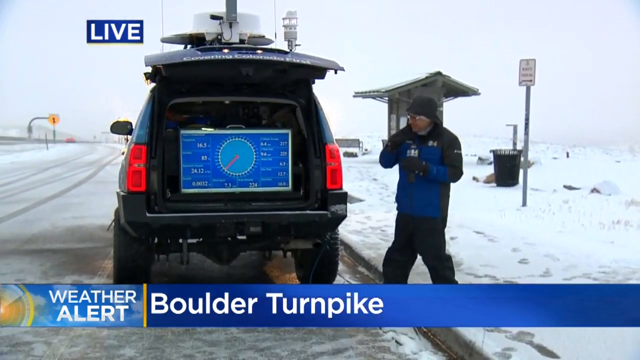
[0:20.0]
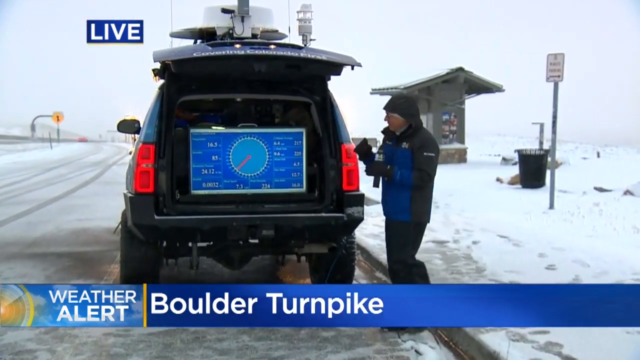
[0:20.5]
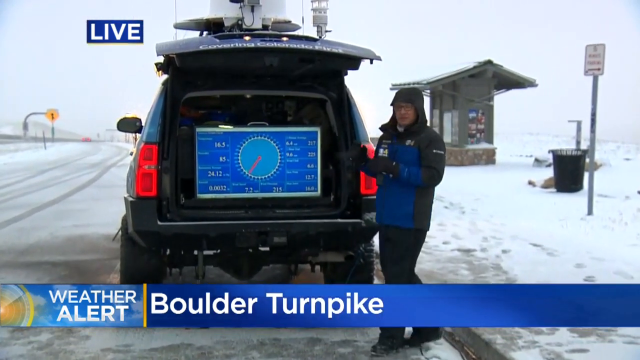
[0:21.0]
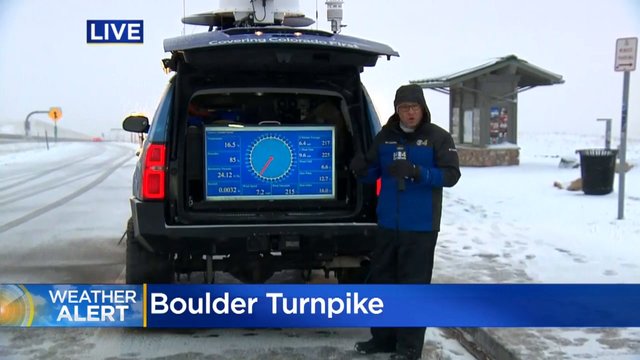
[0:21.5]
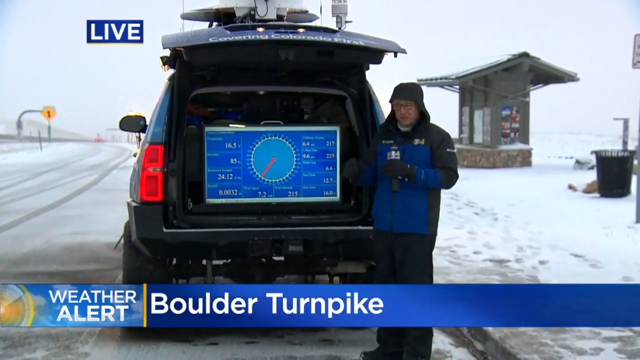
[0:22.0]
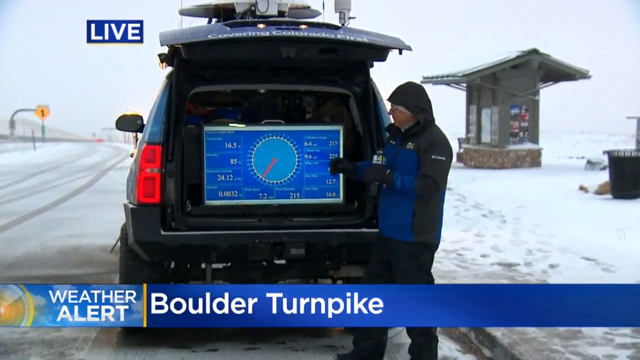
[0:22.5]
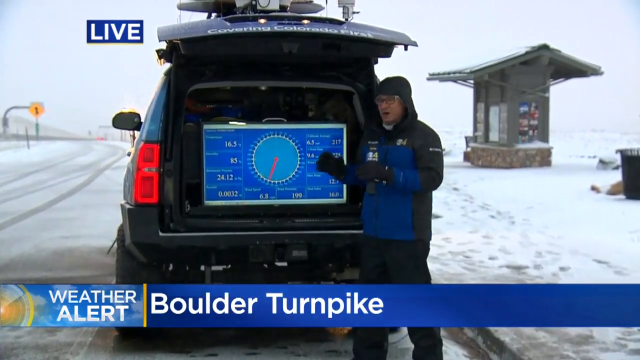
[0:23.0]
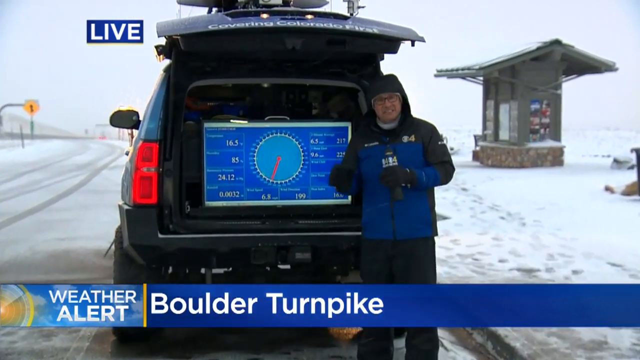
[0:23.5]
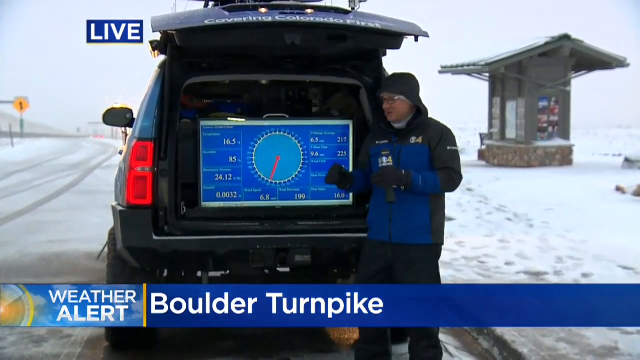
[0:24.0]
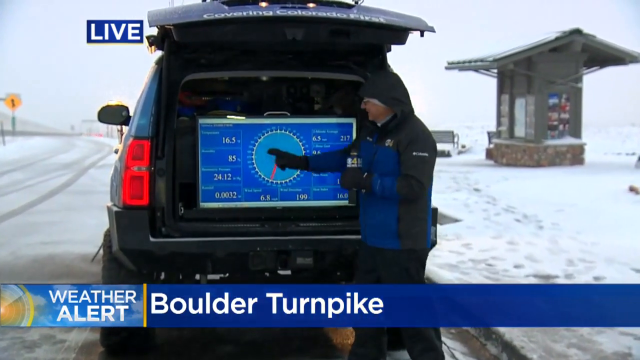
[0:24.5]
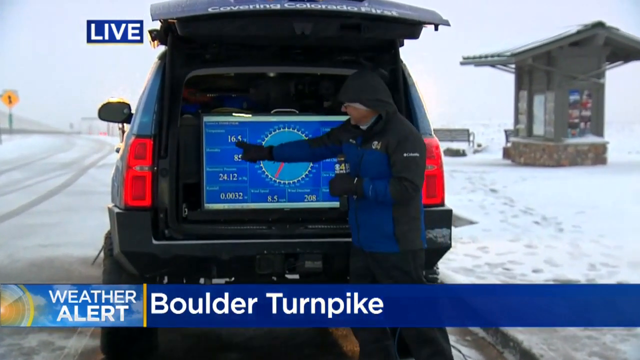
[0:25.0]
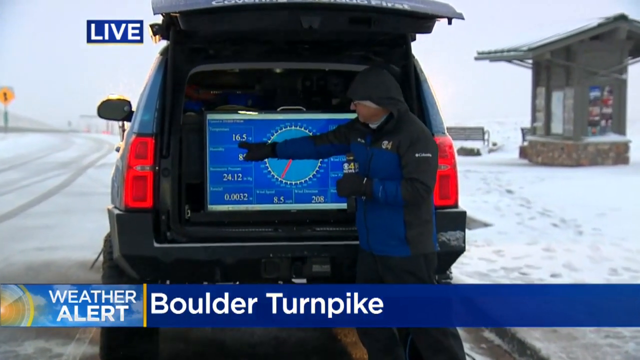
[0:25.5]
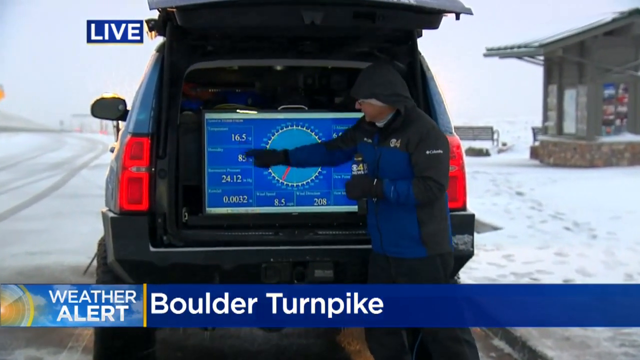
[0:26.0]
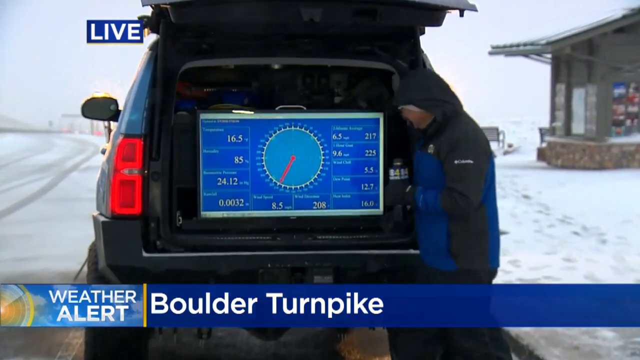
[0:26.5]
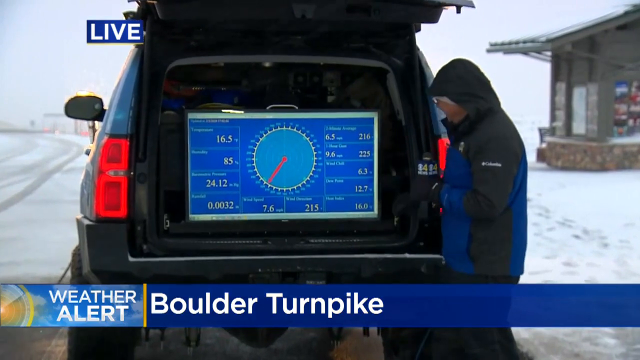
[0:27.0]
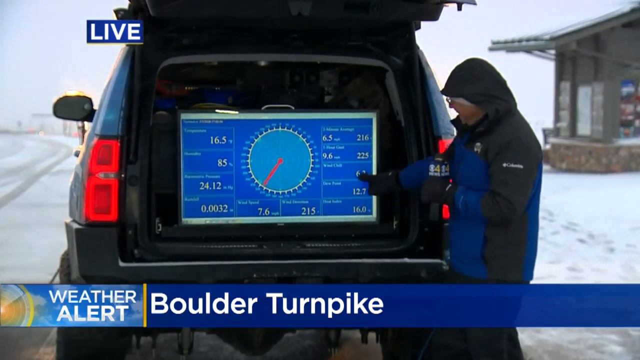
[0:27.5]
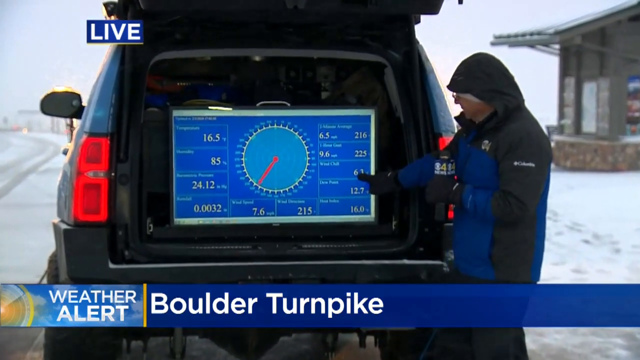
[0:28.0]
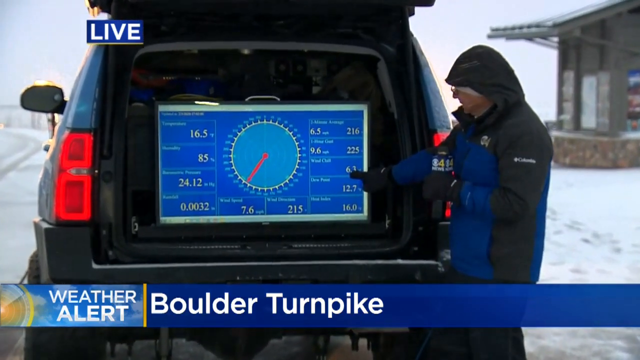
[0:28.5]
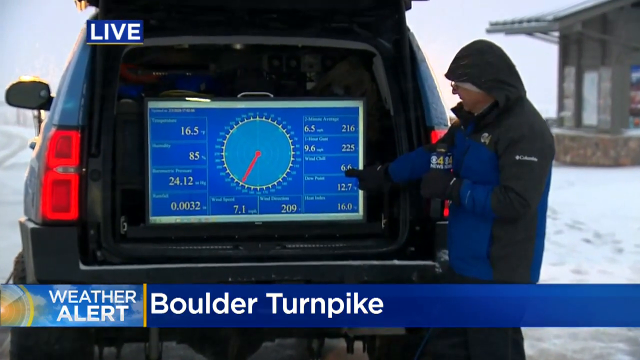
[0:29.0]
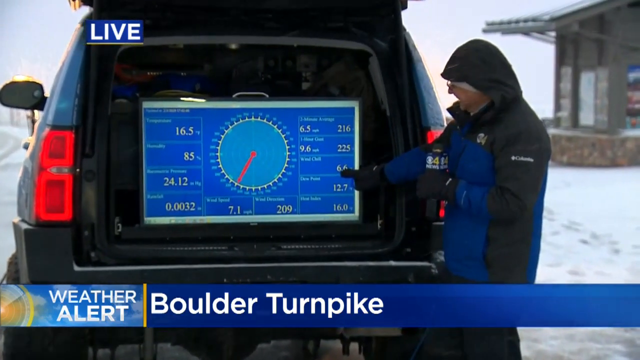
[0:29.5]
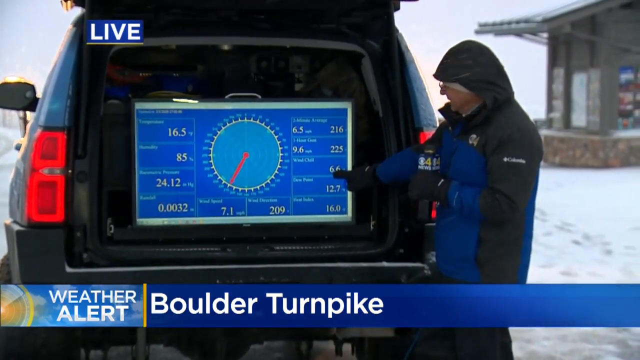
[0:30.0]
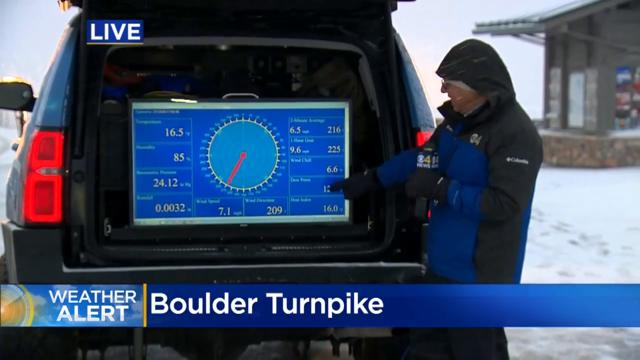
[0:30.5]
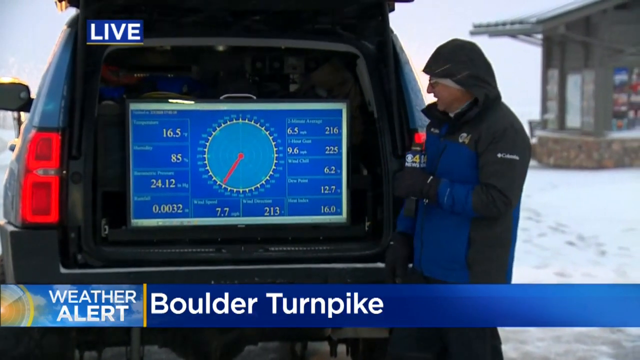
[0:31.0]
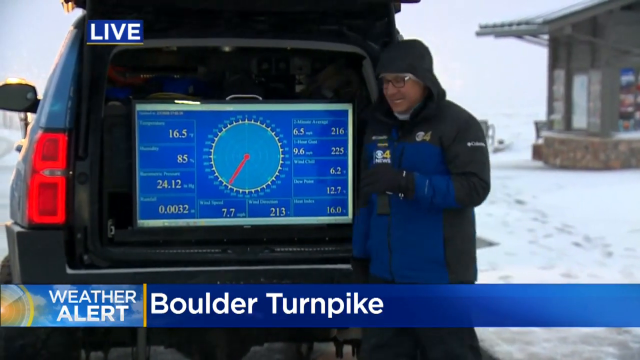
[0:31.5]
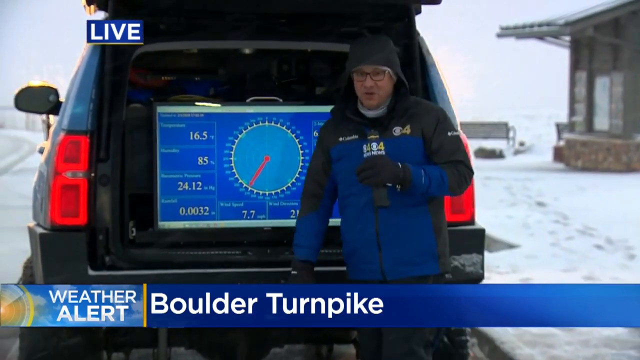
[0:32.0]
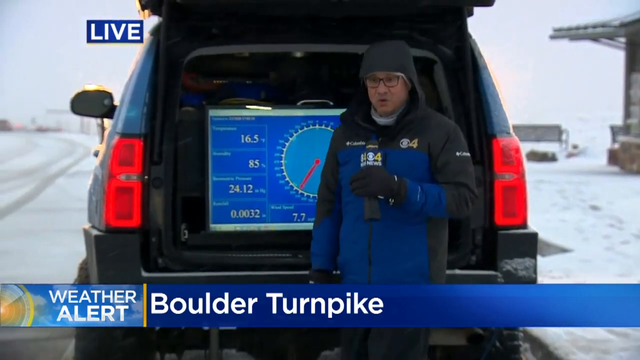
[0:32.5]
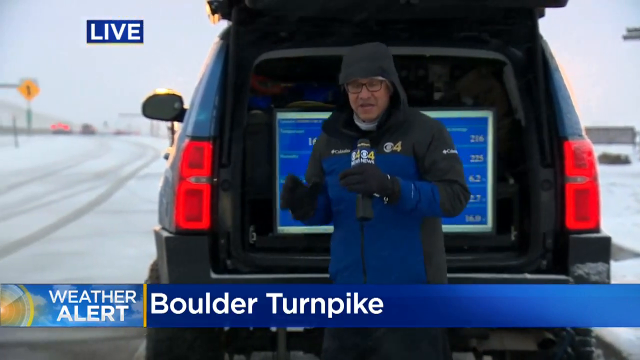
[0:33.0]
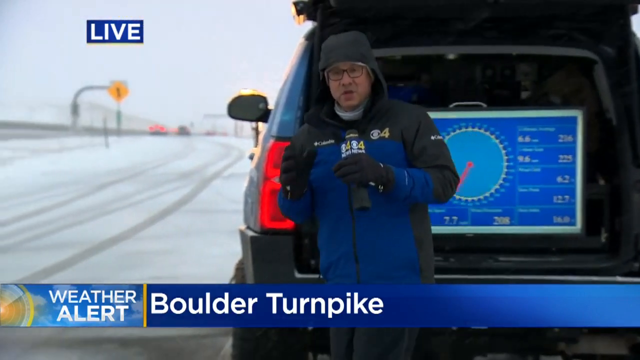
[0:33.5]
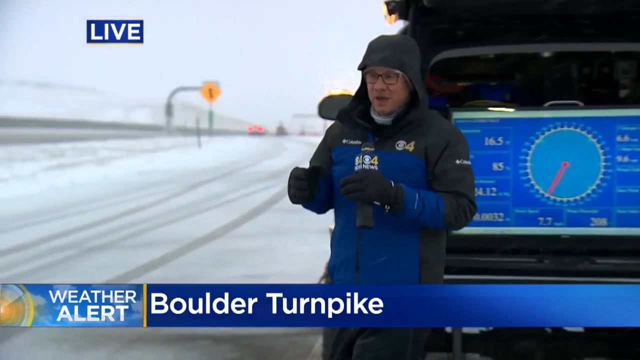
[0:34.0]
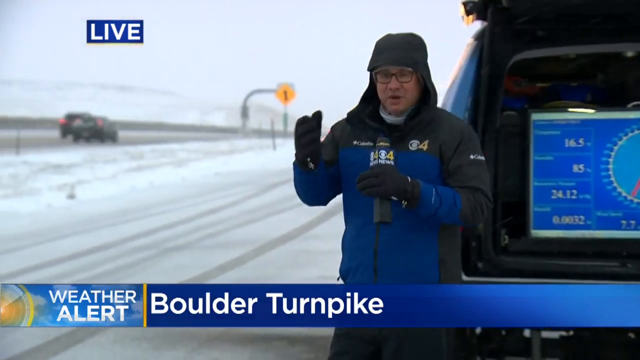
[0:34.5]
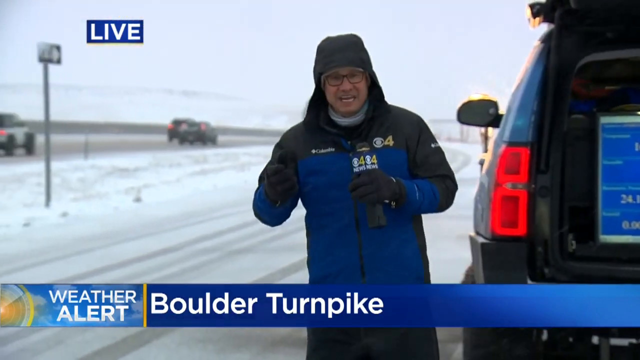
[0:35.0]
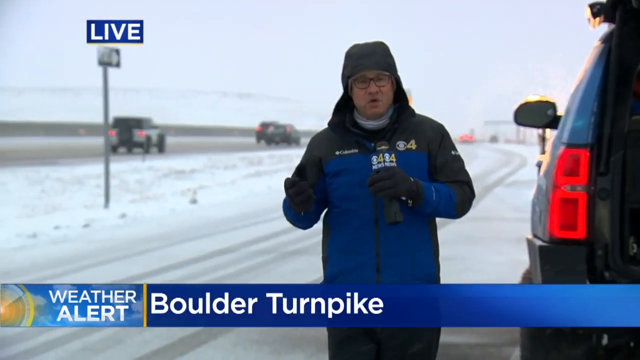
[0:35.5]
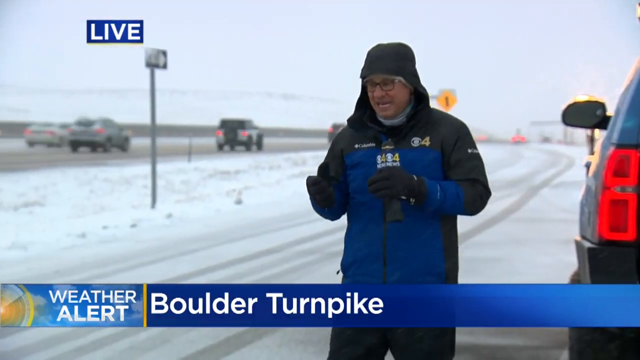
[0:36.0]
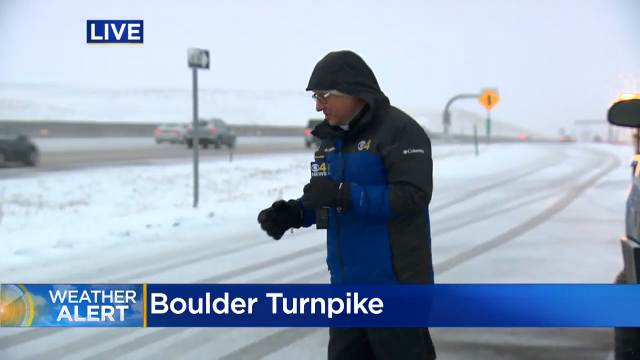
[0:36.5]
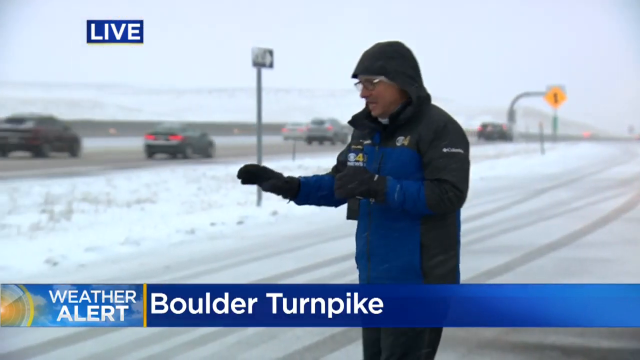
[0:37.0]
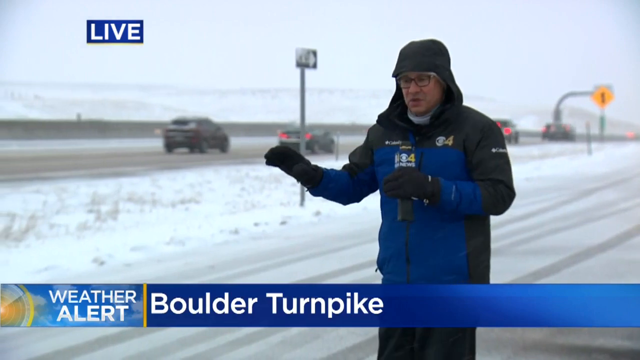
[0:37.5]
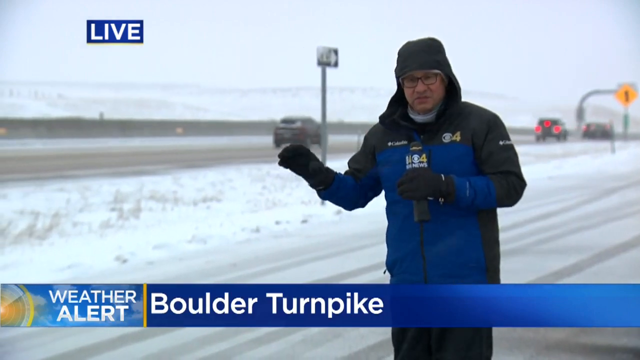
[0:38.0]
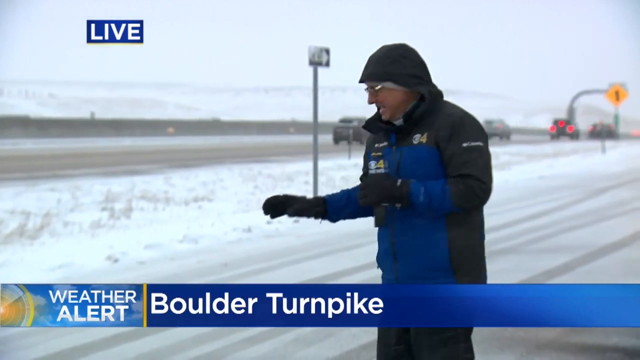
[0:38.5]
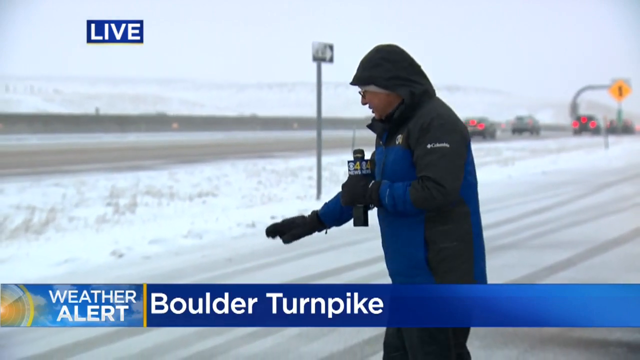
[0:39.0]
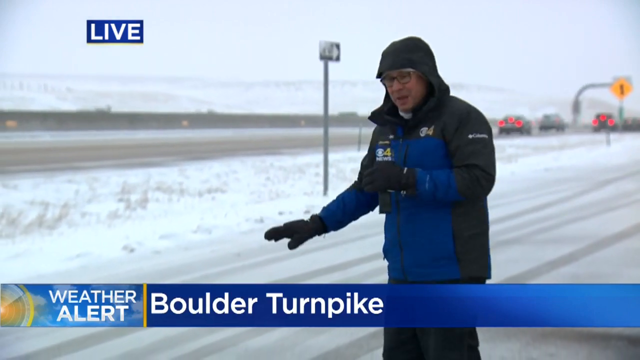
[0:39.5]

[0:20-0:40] What looks like a real-time weather alert is on screen: at the top, "live" appears in white text on a small blue background, and at the bottom the text reads "Boulder Turnpike" and "weather alert". It appears to be a news weather report. A man in a winter jacket, a hat, black winter pants and gloves holds a microphone. There is apparently some snow on the ground outside. He stands in front of the open back of the weather van, where there is a monitor that looks like a weather monitoring station, showing the temperature at around 16 degrees, the wind chill at 6.6, and other weather information. He then walks to the side towards the street, where cars go by and the roads show some slickness. There is snow around him, and the background is mostly white, with the sky completely white. It is snowing or has snowed recently, and he is doing a weather report outside.